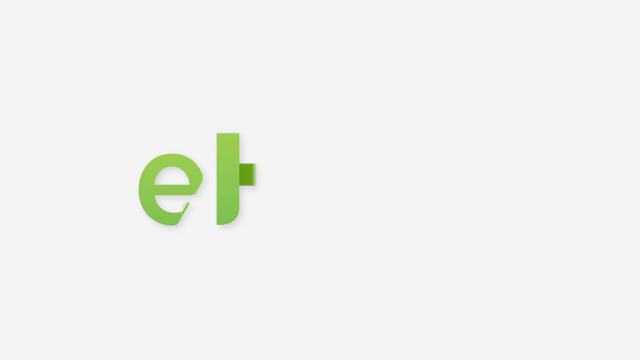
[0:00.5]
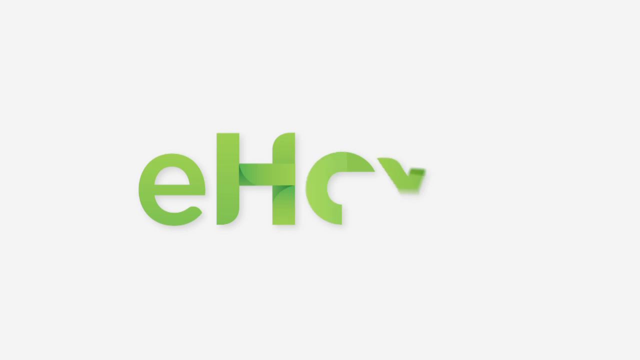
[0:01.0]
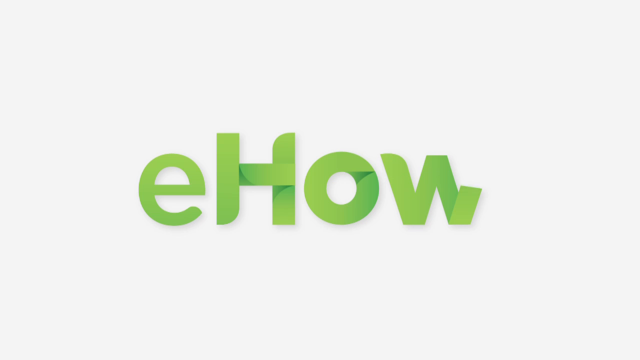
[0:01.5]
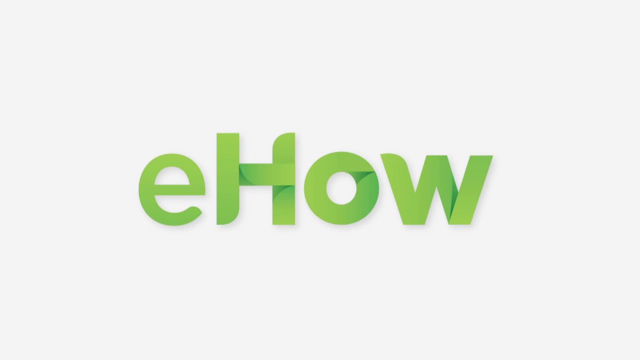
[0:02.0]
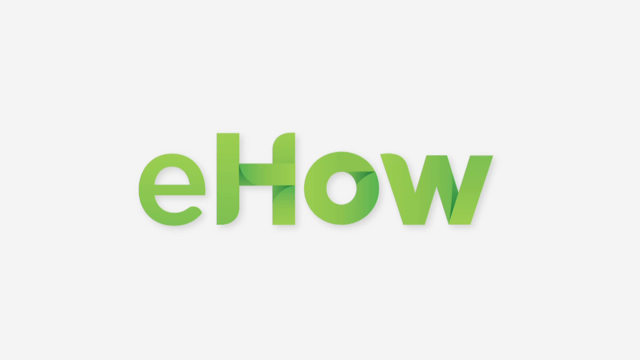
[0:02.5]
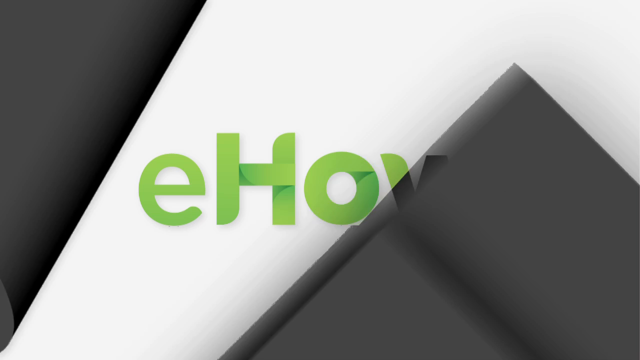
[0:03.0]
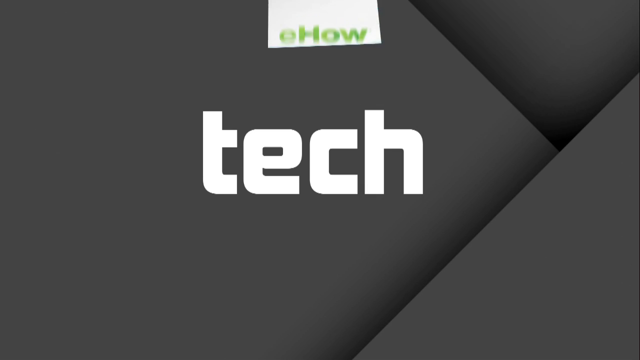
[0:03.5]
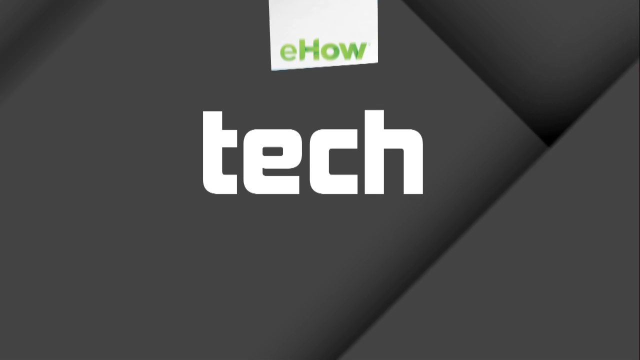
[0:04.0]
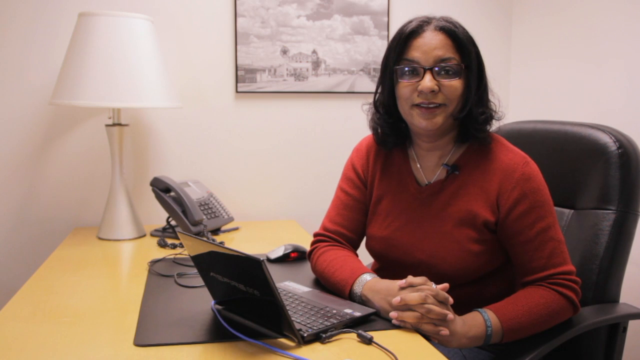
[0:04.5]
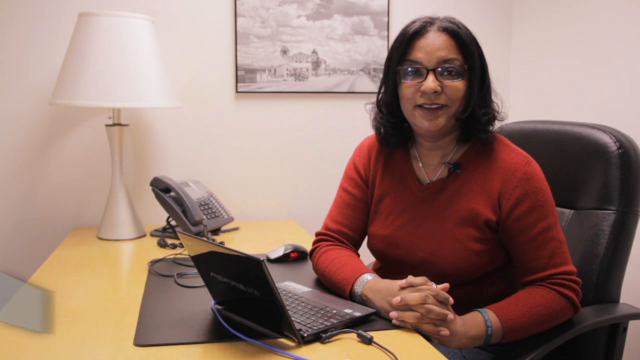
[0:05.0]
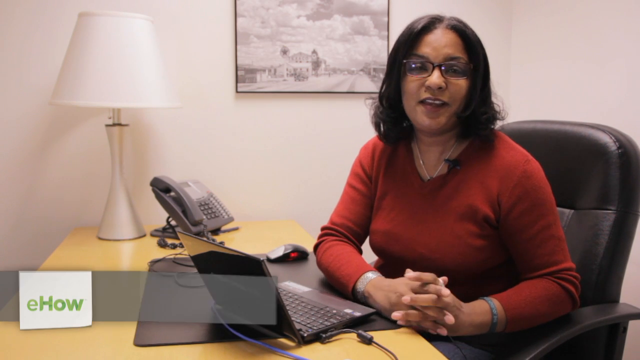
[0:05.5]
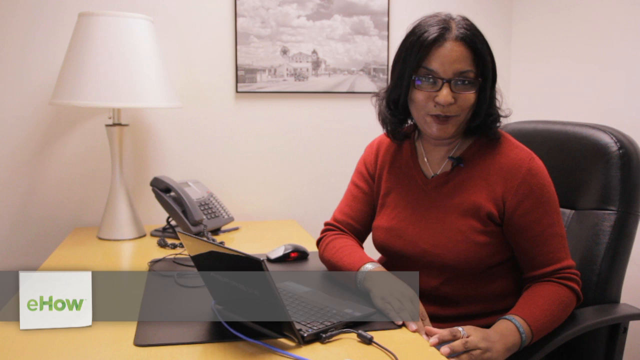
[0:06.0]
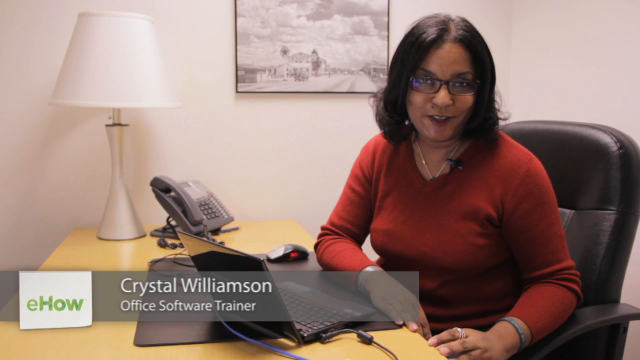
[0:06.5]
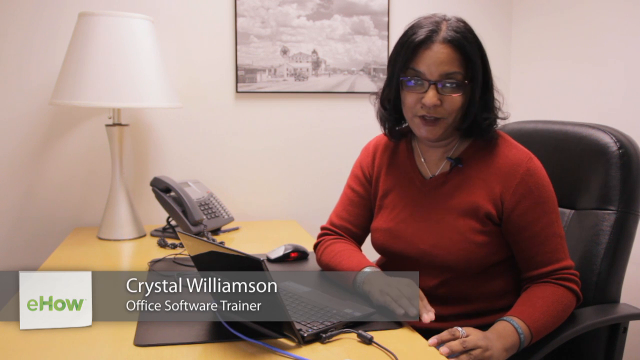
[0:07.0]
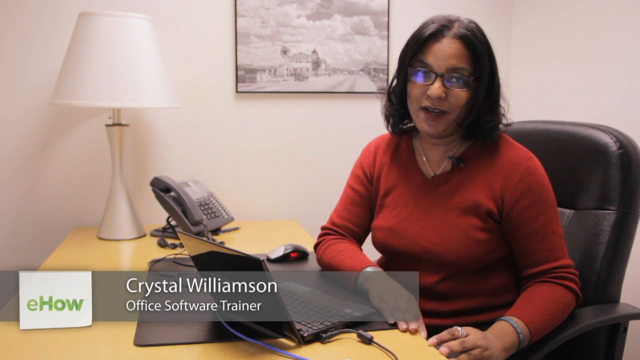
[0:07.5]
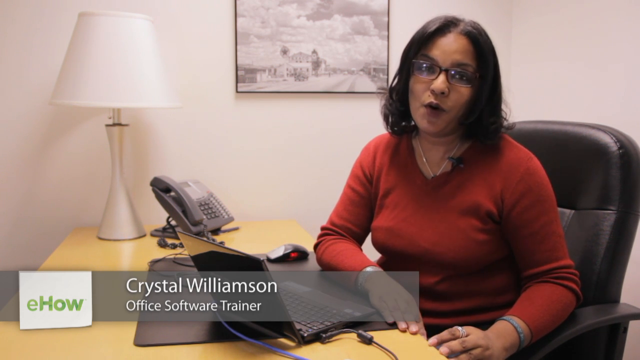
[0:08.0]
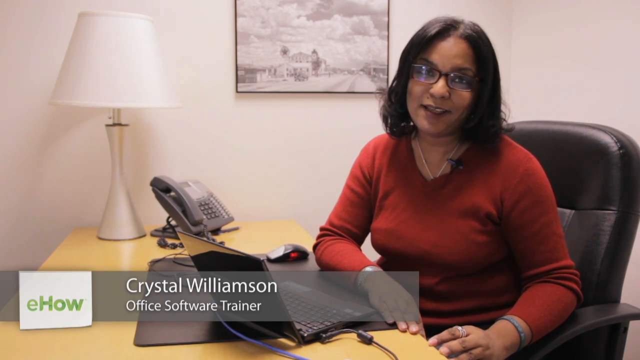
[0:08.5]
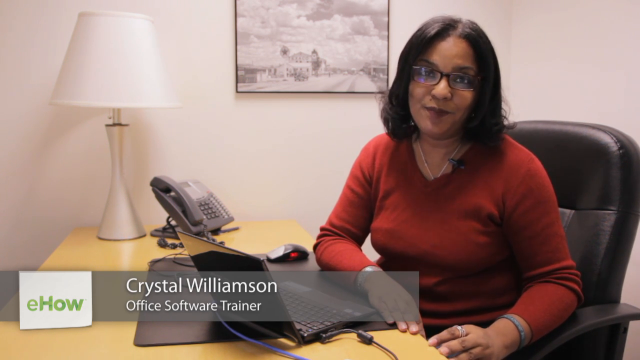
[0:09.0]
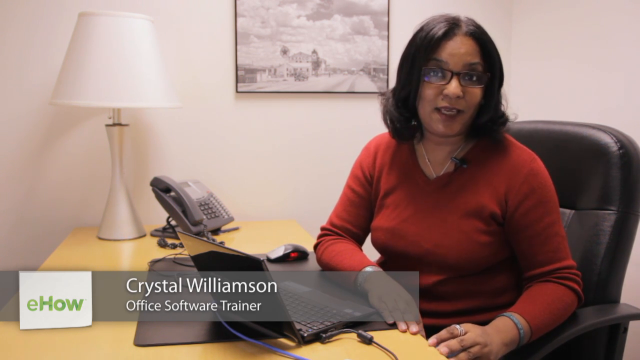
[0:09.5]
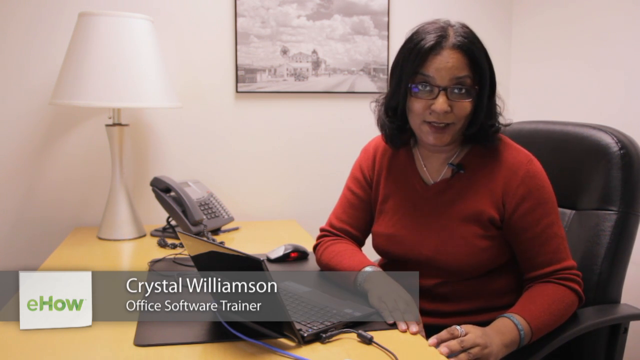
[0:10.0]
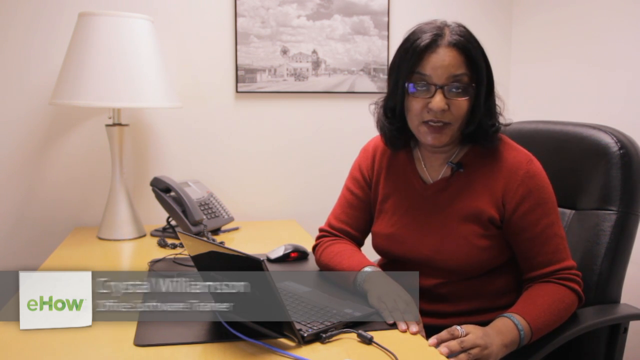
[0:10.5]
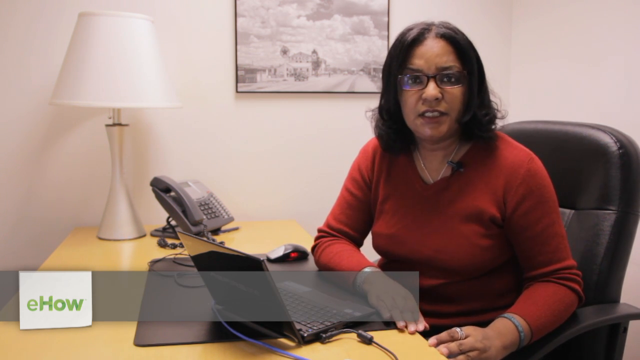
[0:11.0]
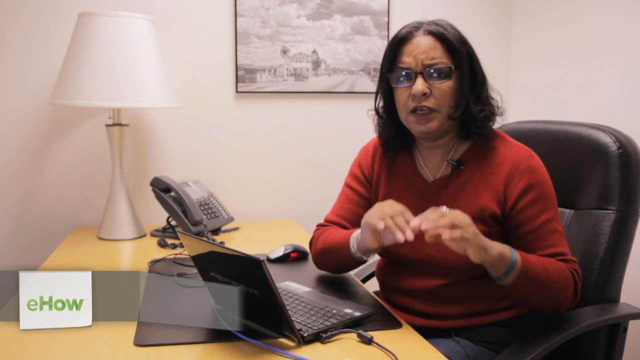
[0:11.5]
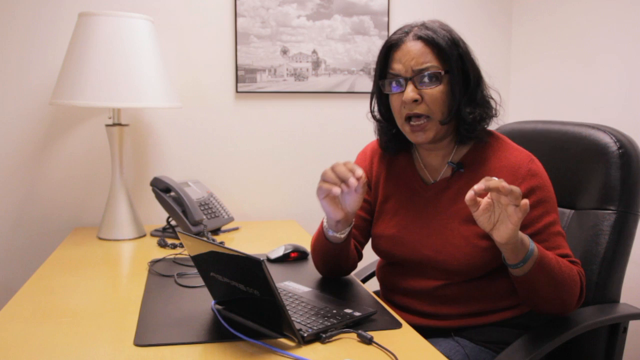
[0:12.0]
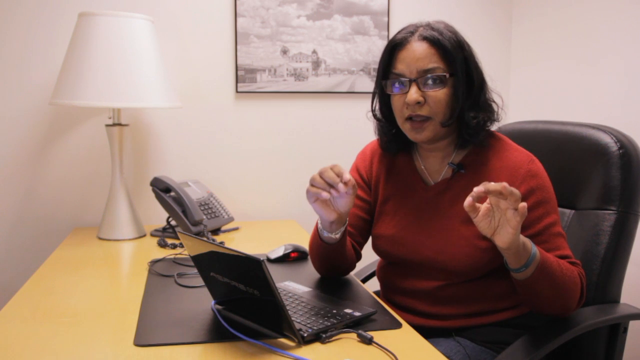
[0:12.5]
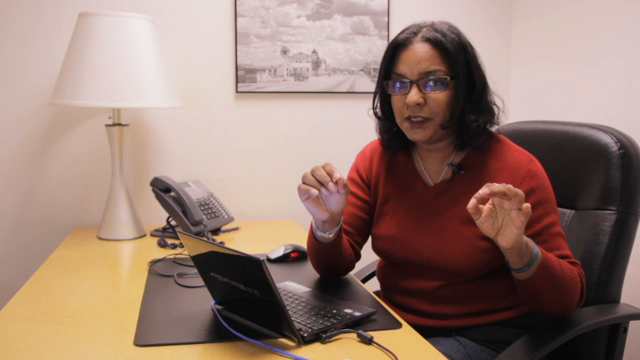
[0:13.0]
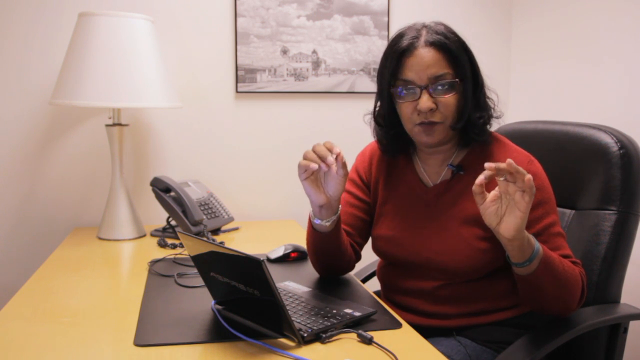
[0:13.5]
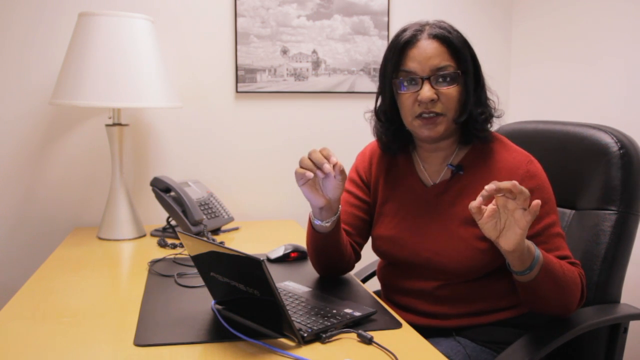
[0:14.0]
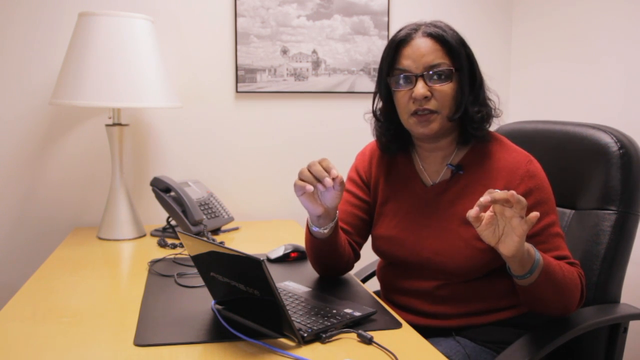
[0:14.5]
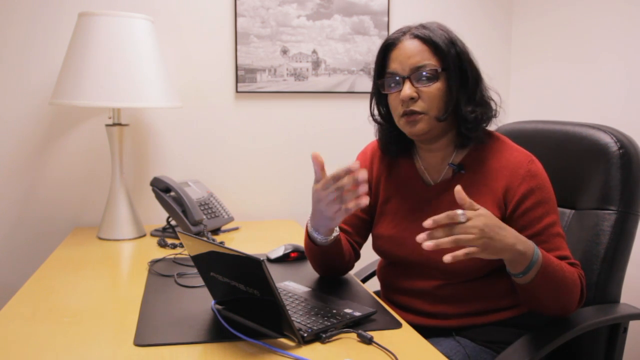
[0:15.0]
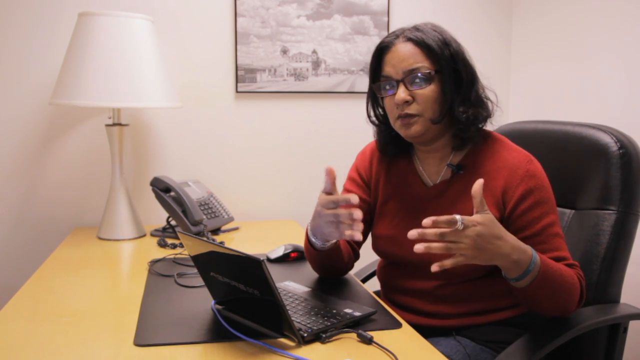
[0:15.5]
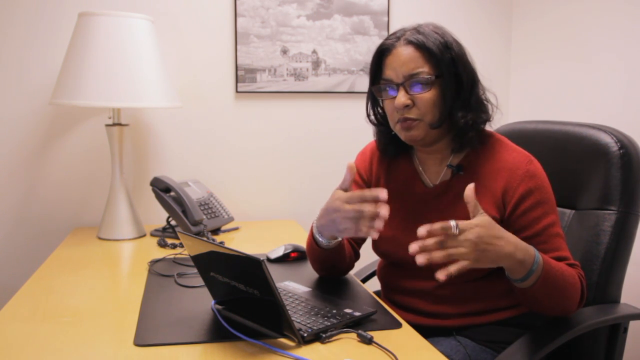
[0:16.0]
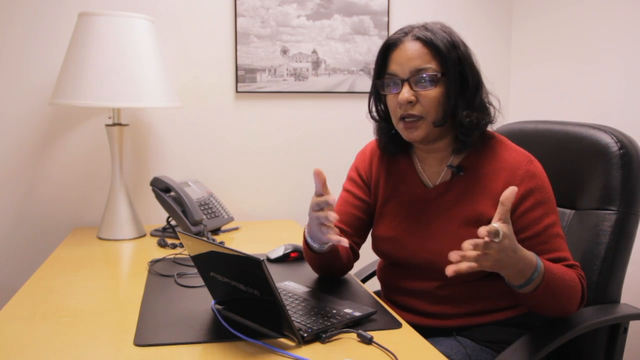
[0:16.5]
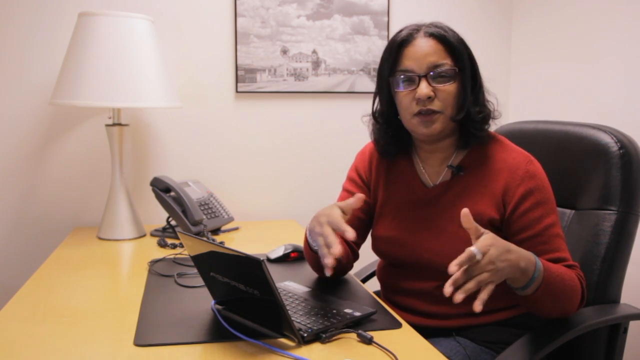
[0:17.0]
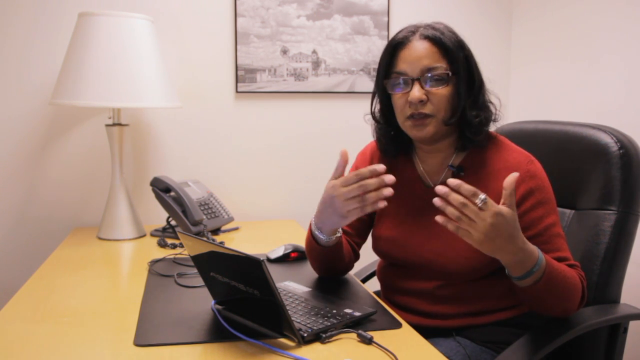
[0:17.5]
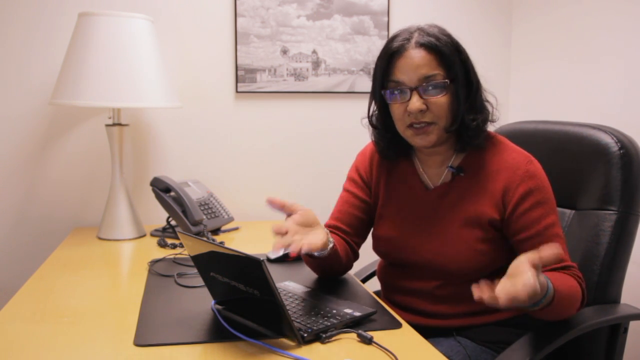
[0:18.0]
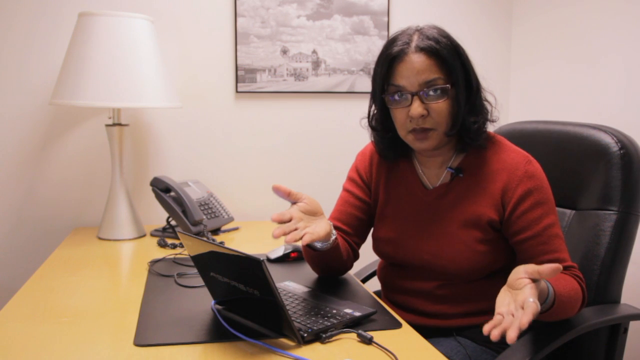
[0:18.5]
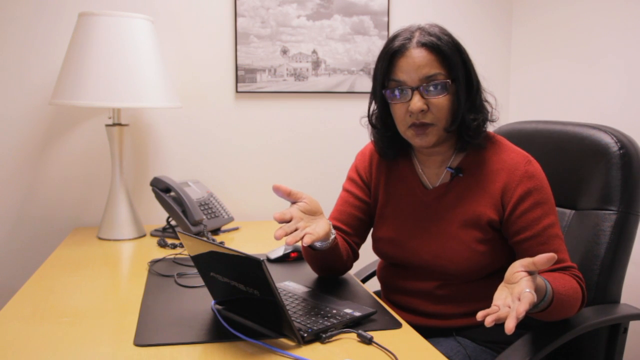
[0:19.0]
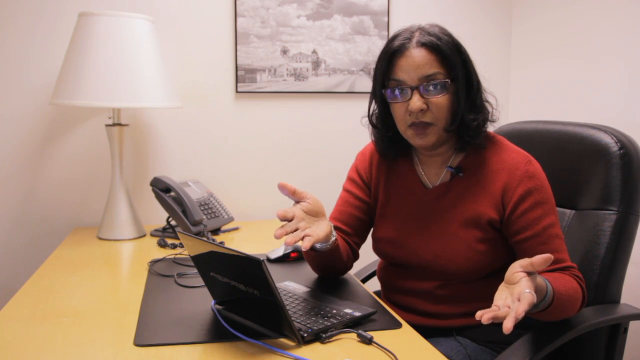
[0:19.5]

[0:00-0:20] The video begins on a white background with an animated green eHow intro in a very triangular, fluid animation. It transitions to a dark gray screen with white text reading "tech" and the eHow logo above it. Then a casually dressed woman appears in an office setting with a phone, a lamp and a computer. Her name, "Crystal Williamson", and her title, "office software trainer", are on the screen, with the eHow logo next to her title. She talks to the camera, gesturing as she speaks.